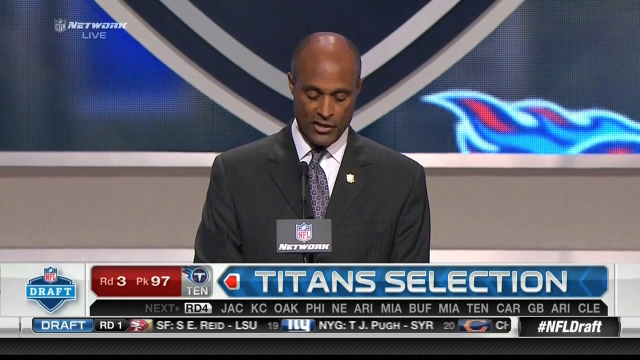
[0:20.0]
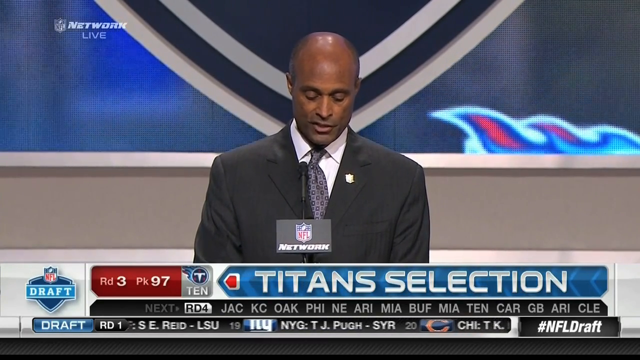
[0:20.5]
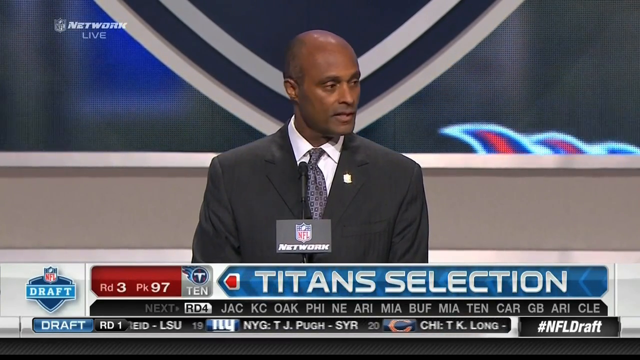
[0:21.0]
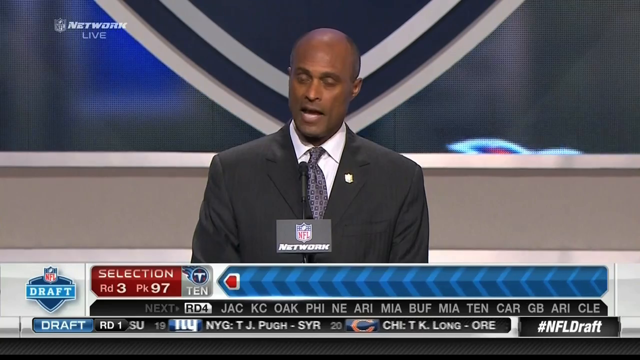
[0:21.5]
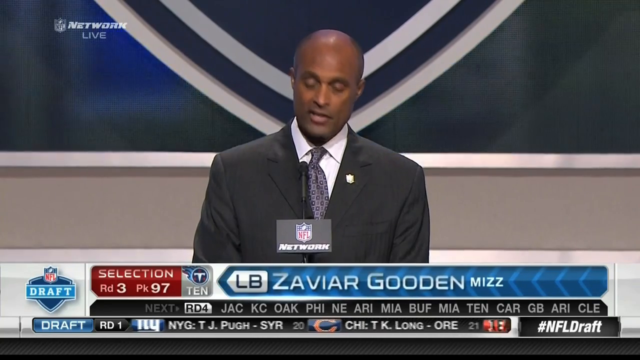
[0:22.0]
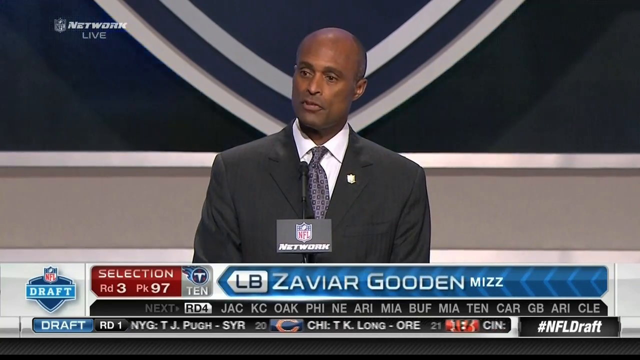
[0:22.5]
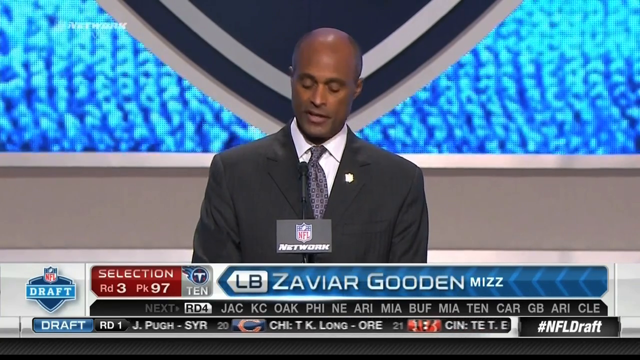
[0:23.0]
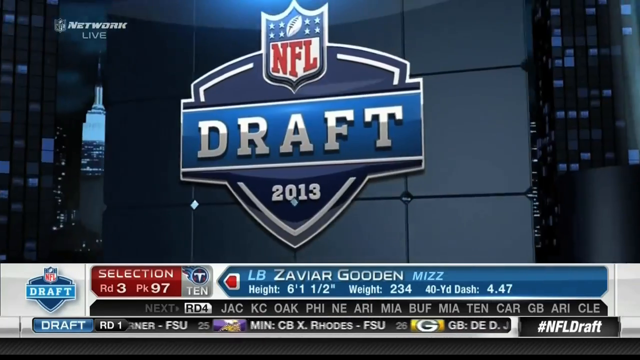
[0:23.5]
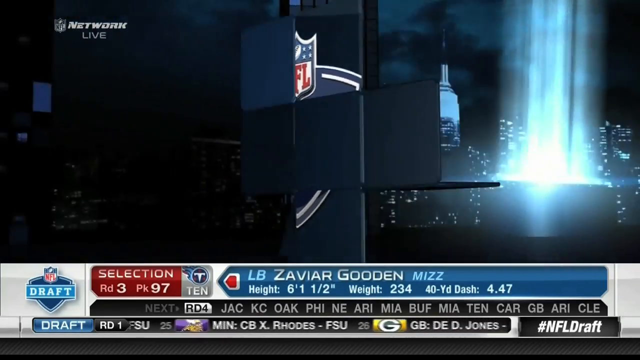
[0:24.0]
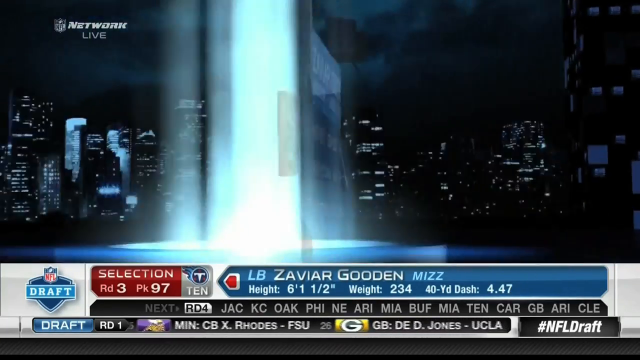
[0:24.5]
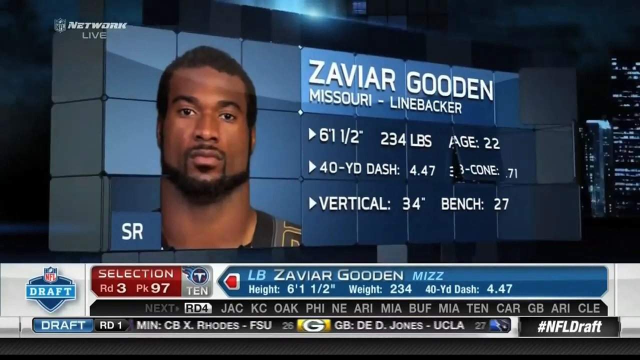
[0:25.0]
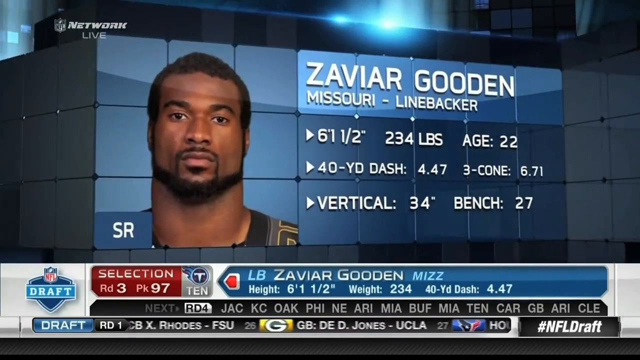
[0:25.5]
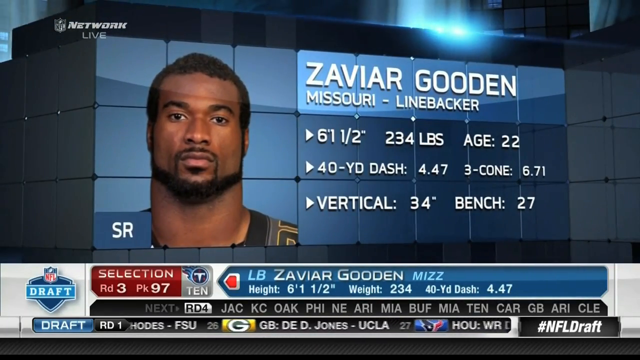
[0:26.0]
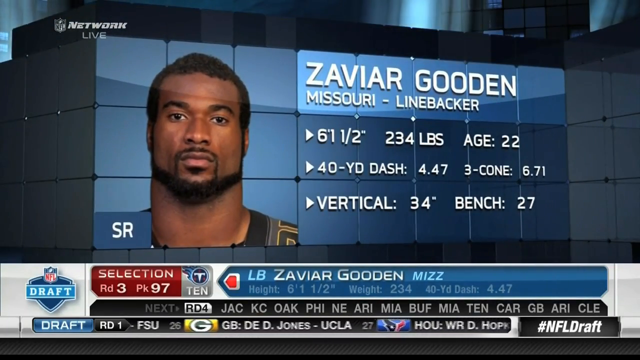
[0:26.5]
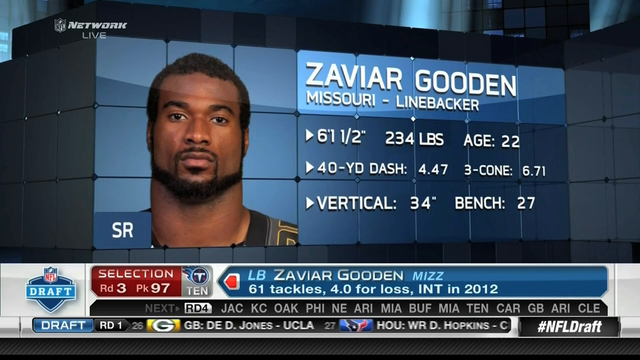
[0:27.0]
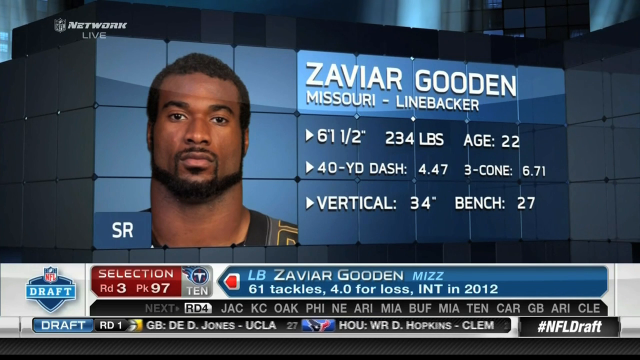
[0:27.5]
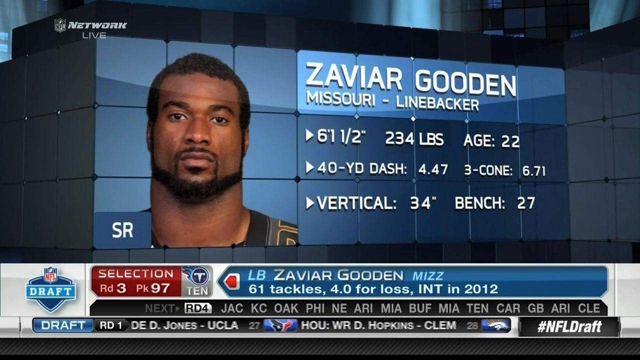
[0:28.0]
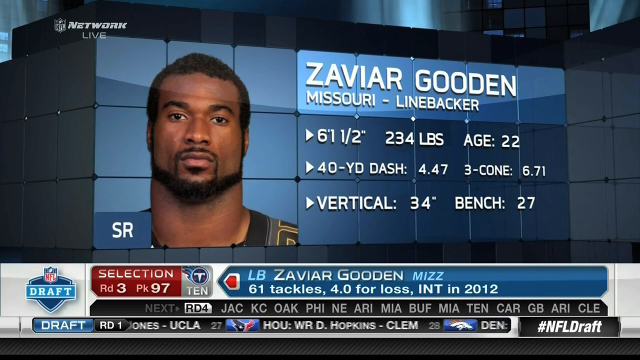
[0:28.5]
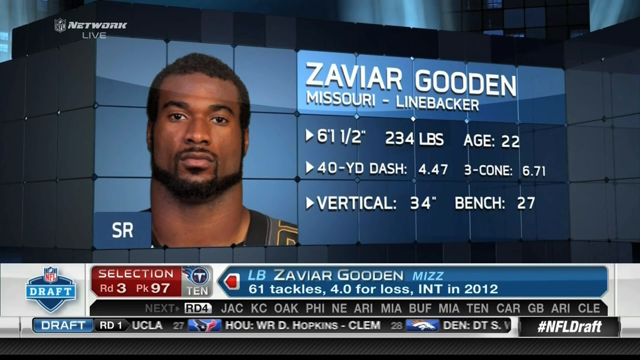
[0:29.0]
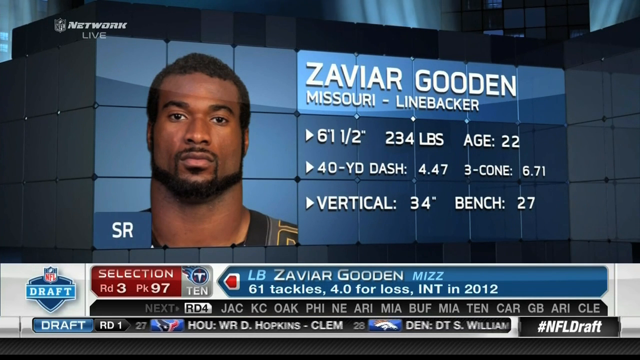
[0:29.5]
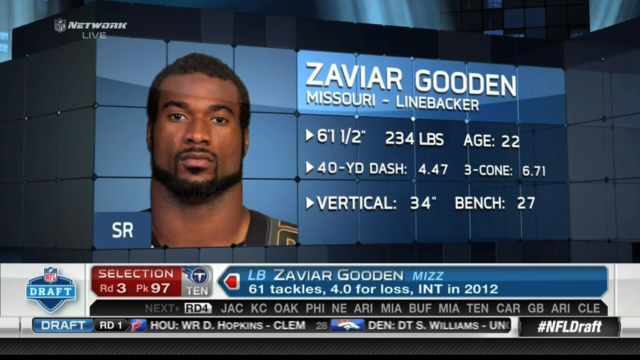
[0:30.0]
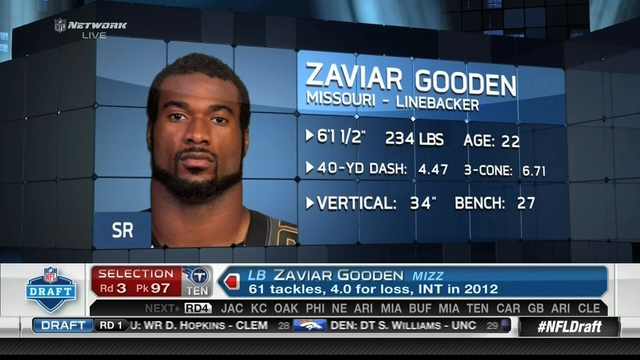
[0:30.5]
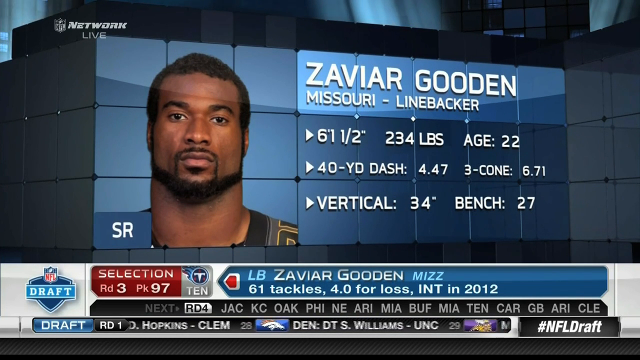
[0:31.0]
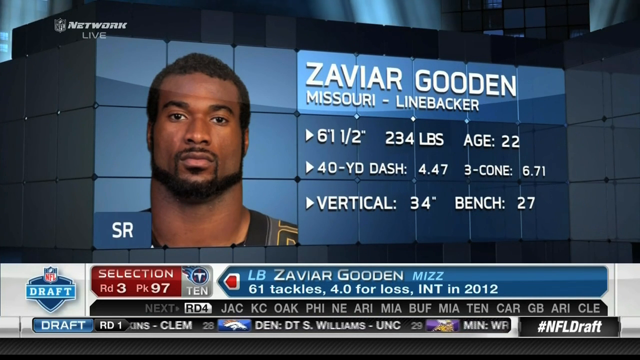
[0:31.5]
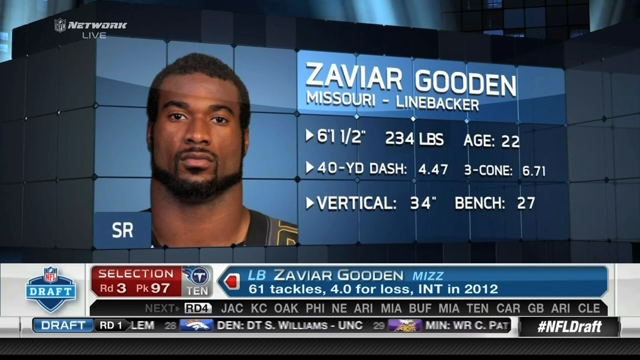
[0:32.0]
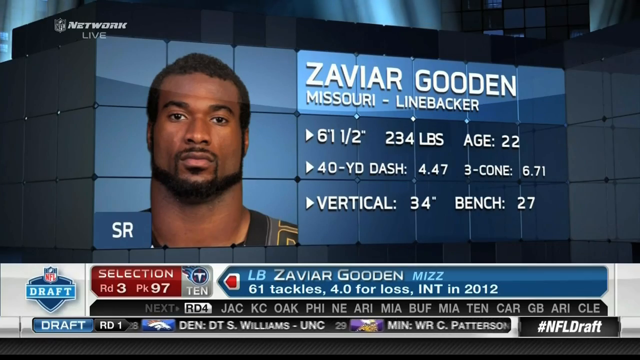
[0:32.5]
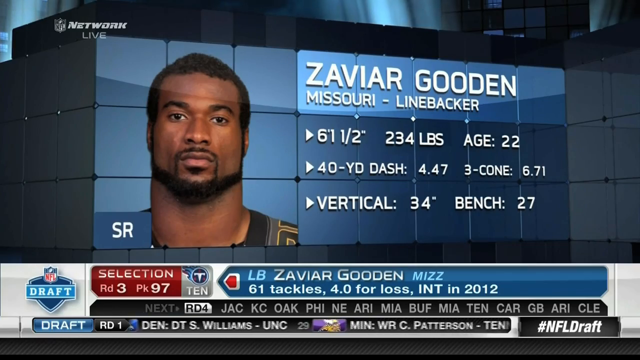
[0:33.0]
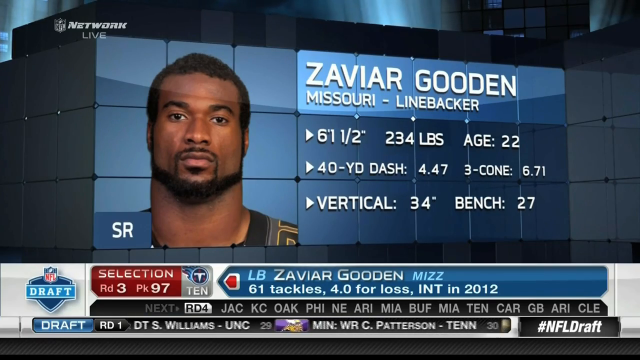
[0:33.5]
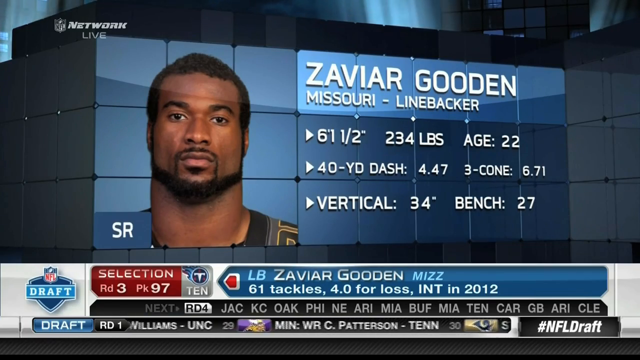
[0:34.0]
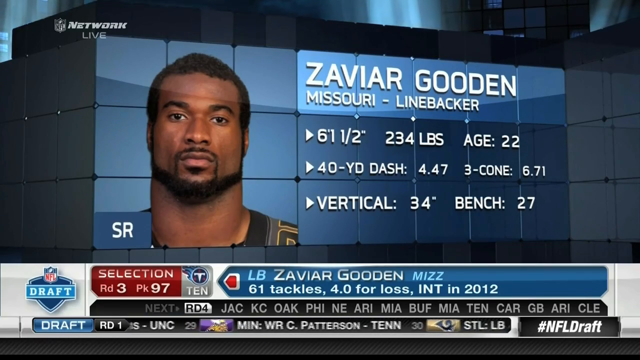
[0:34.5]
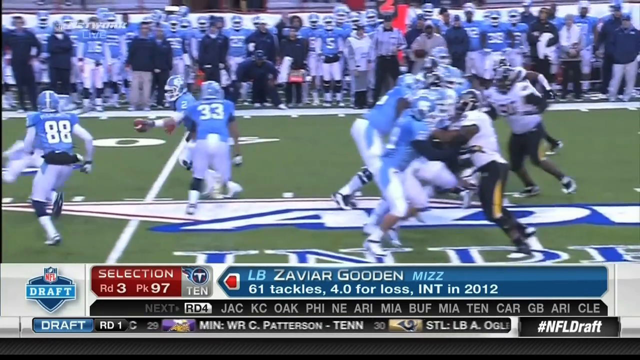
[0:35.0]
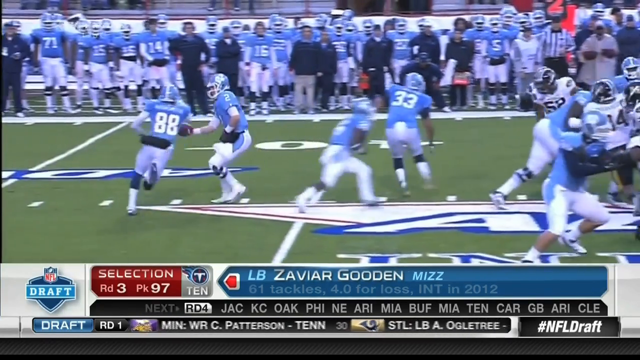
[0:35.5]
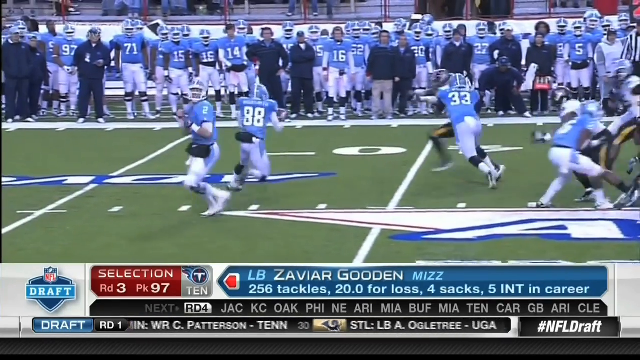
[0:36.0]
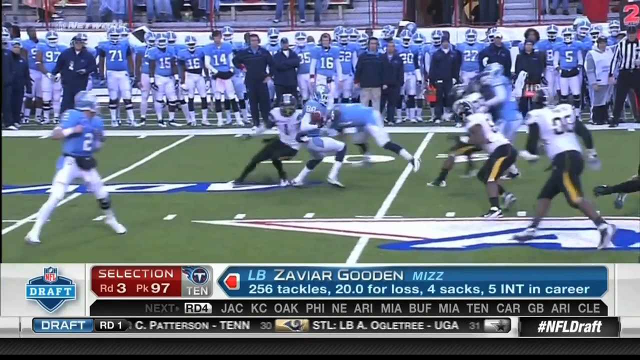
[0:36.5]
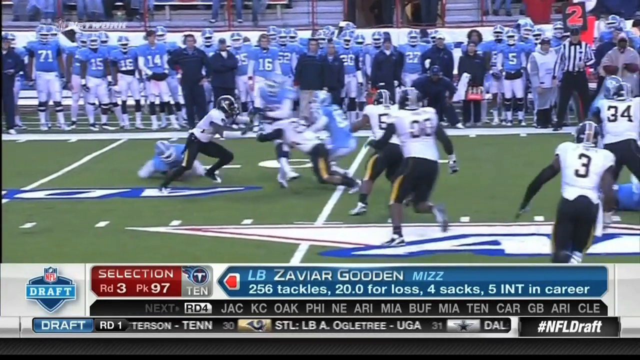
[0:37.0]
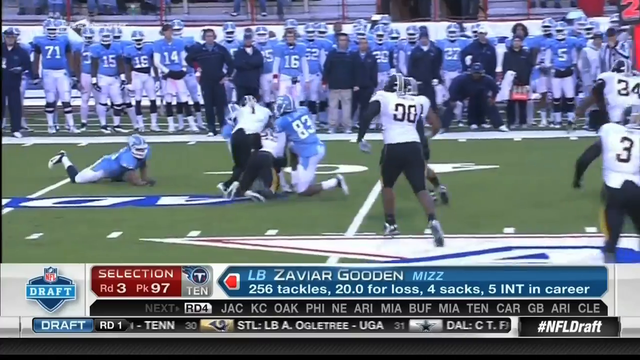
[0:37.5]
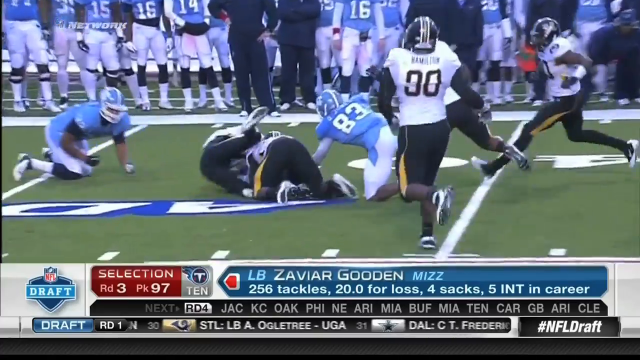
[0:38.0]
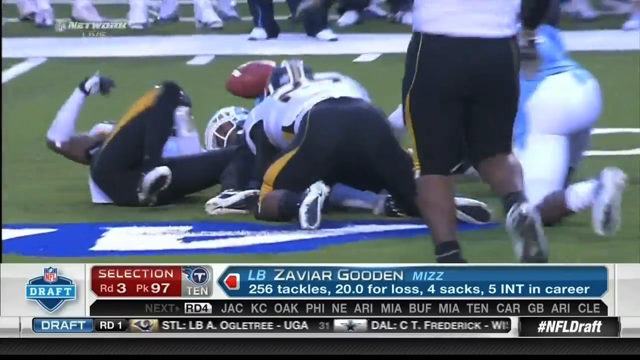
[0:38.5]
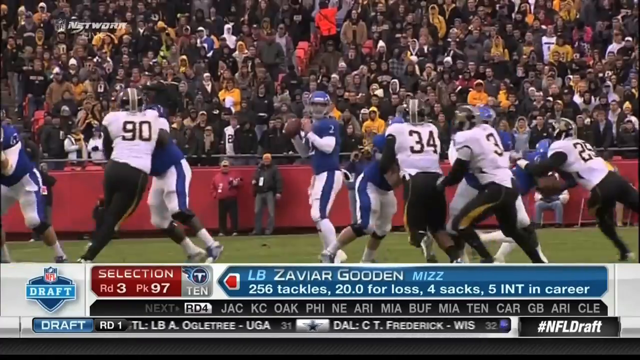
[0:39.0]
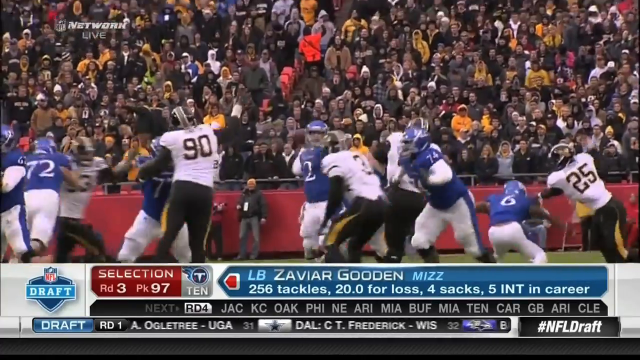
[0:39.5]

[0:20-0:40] Information appears on the screen about the Tennessee Titans draft selection, showing details and statistics for Xavier Gooden, who also appears on screen. He is a linebacker from Missouri. His height and weight are shown: 234 pounds, age 22. He runs the 40-yard dash in 4.47, the three-cone drill in 6.71 seconds, has a 34-inch vertical and a bench of 27. The selection is round three, pick 97. Further information lists 61 tackles, 4.0 for loss and an INT in 2012, along with information about his appearances in the NFL draft. The image then changes to a football game between the Tennessee Titans and the Oakland Raiders, with NFL Network on the microphone. The Titans wear light sky blue uniforms with large white block numbers on the back. Players 88 and 33 run on the field, and 33 makes a tackle on a player from the opposing team.